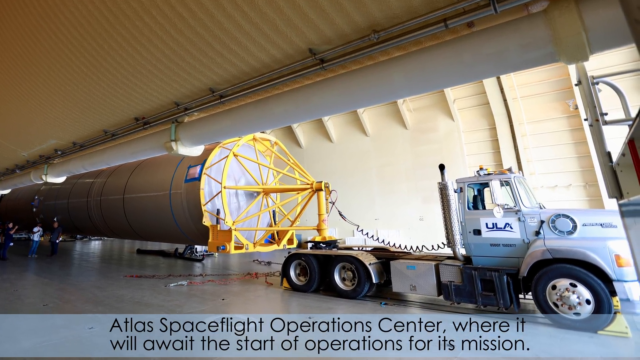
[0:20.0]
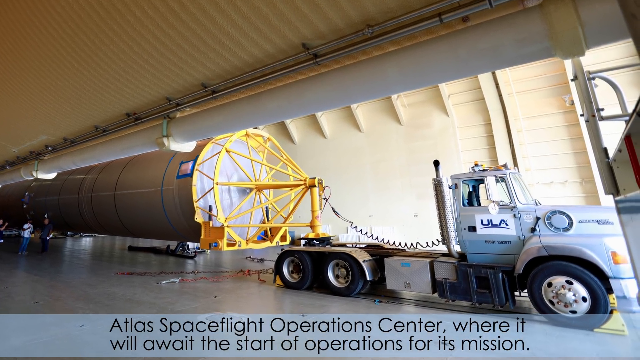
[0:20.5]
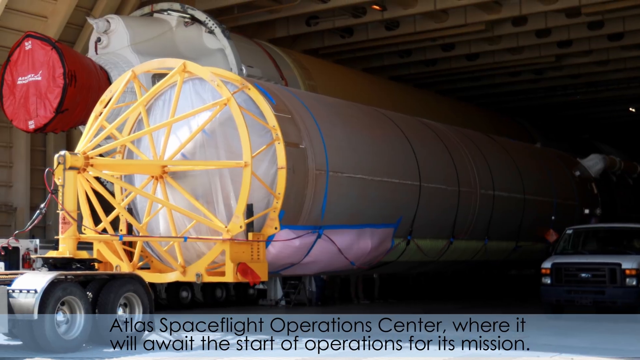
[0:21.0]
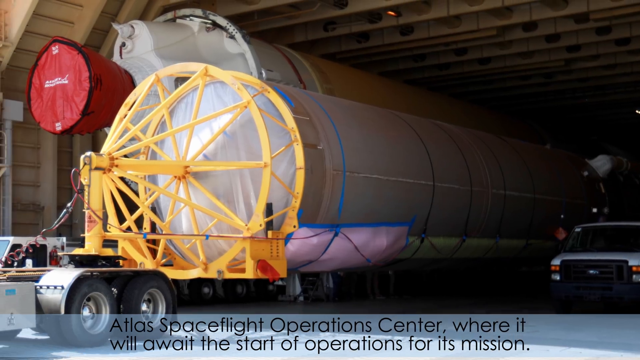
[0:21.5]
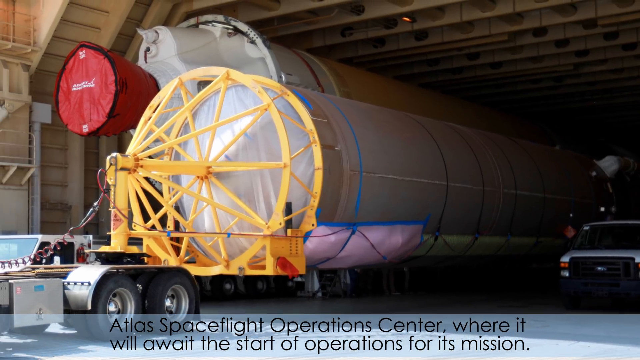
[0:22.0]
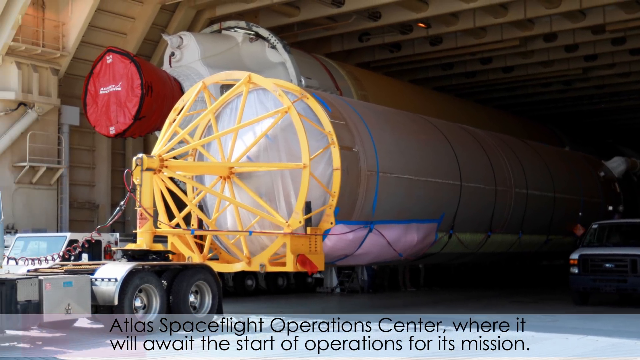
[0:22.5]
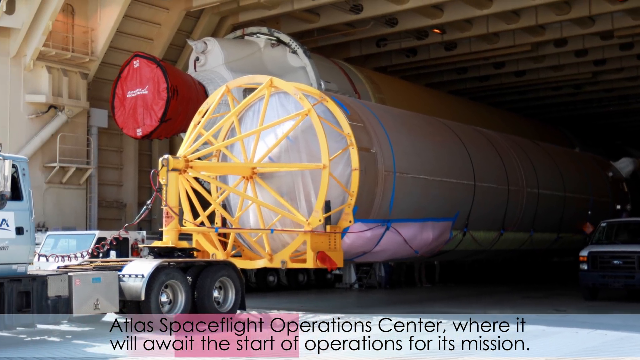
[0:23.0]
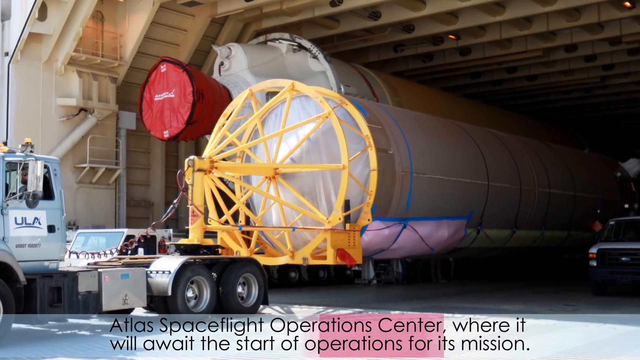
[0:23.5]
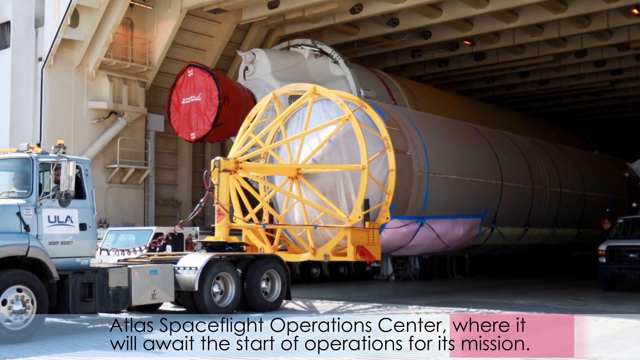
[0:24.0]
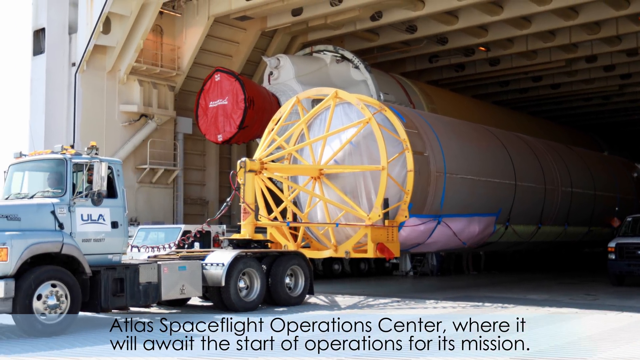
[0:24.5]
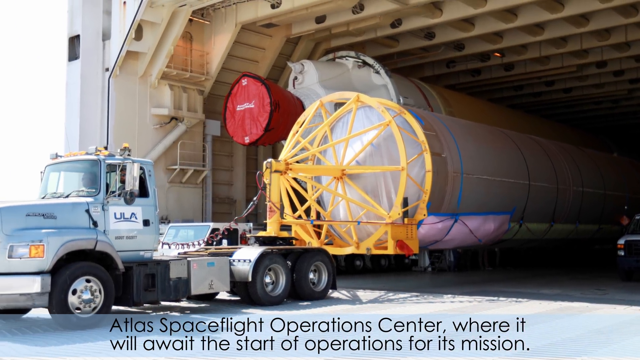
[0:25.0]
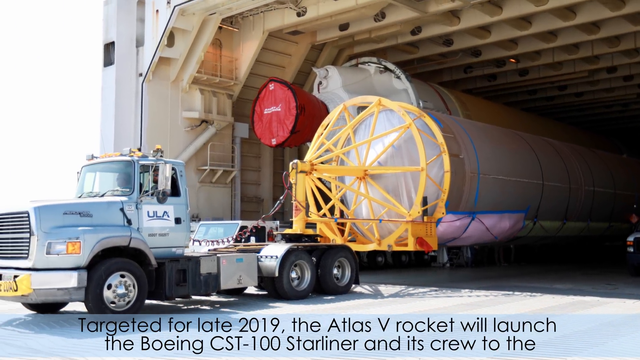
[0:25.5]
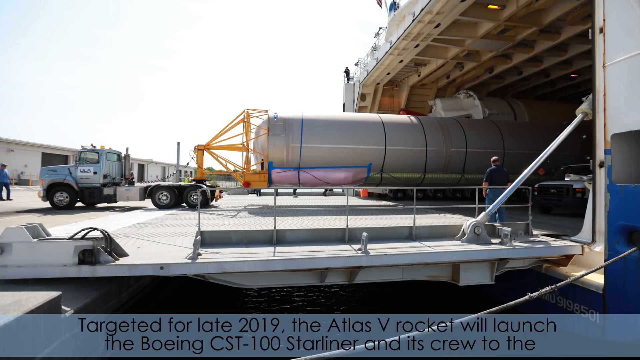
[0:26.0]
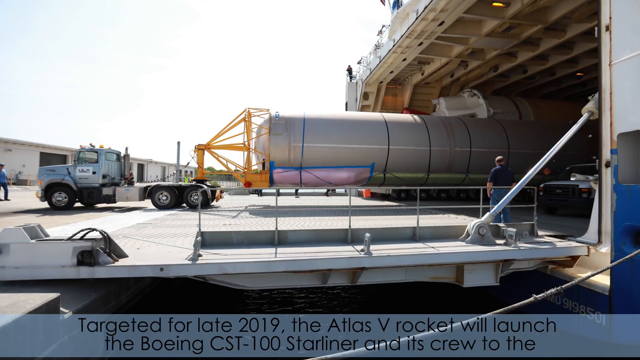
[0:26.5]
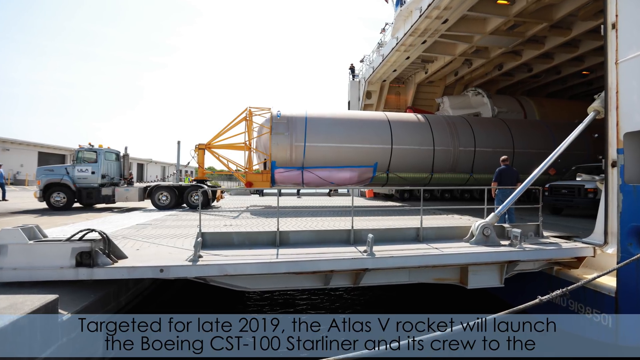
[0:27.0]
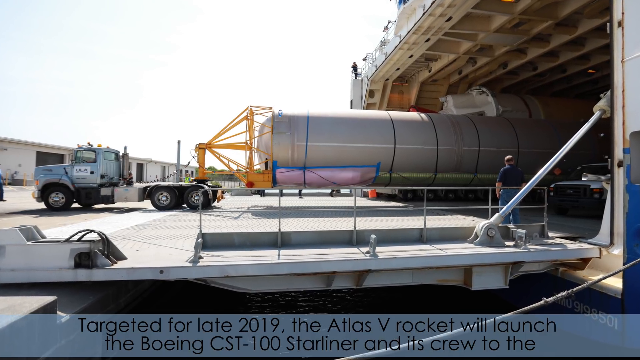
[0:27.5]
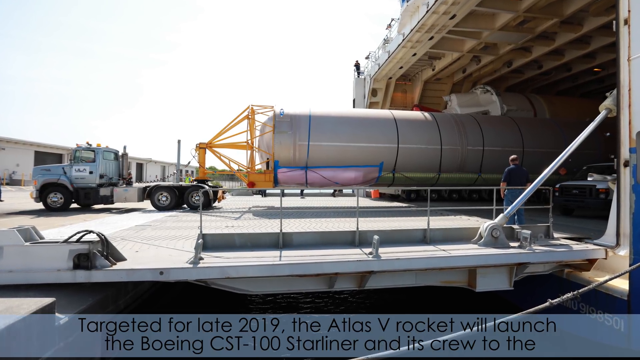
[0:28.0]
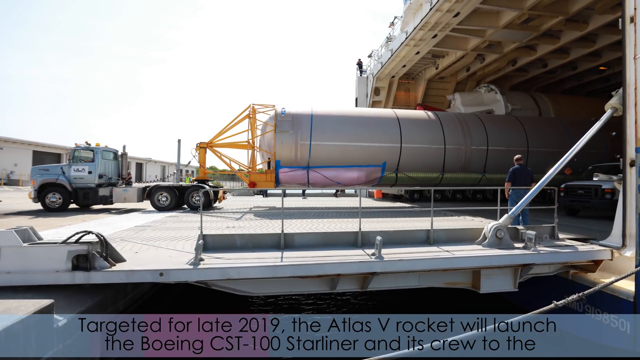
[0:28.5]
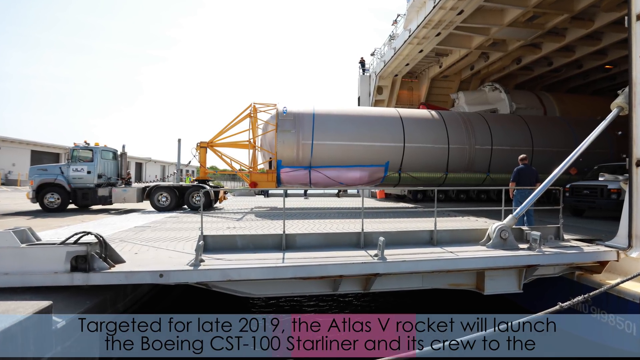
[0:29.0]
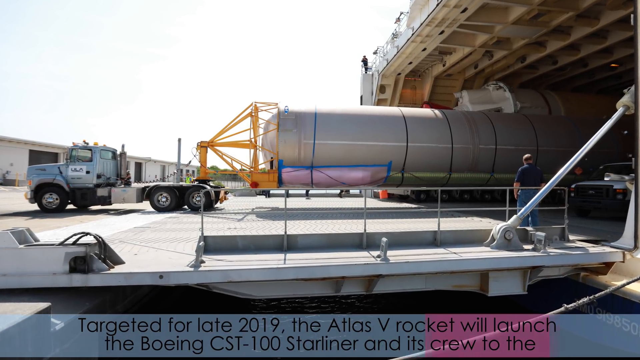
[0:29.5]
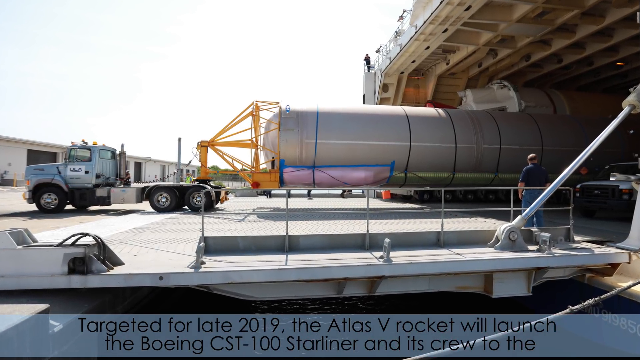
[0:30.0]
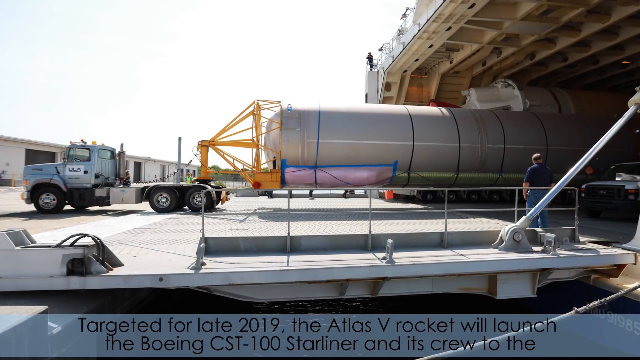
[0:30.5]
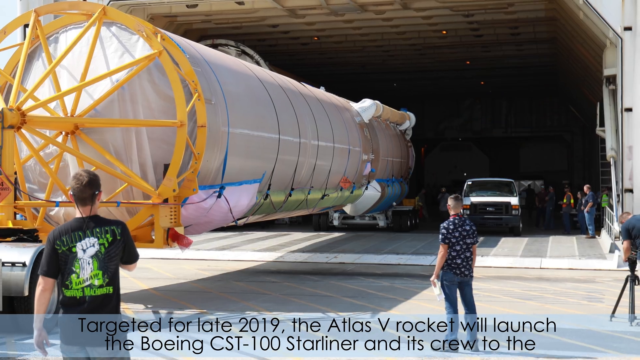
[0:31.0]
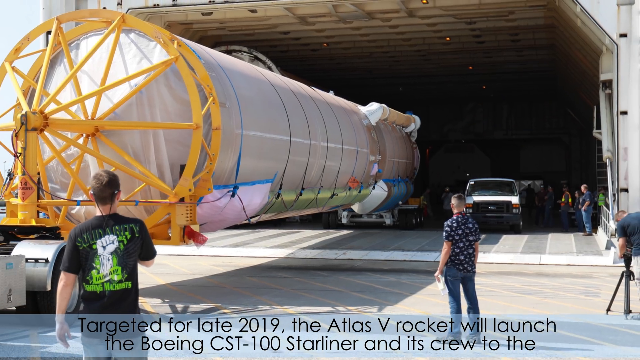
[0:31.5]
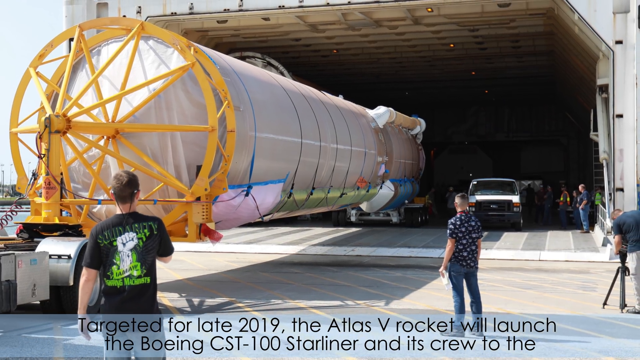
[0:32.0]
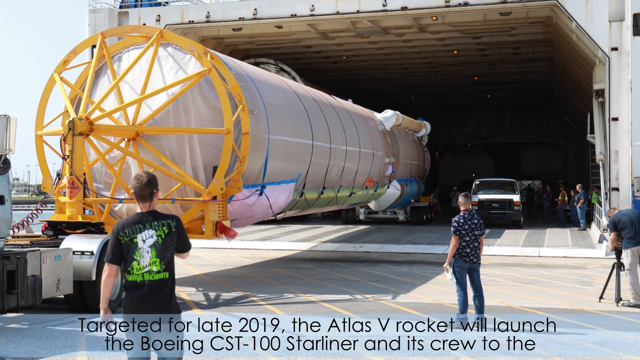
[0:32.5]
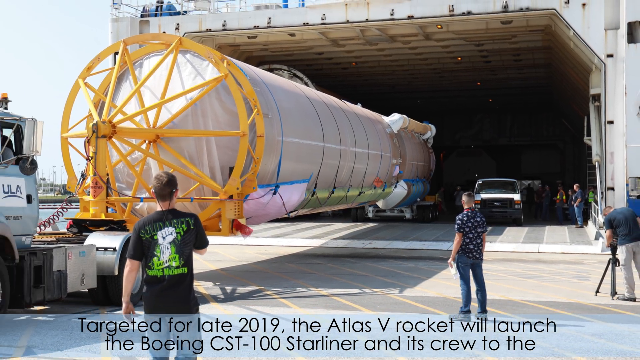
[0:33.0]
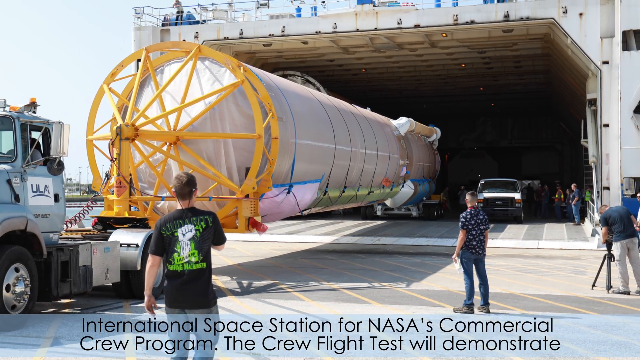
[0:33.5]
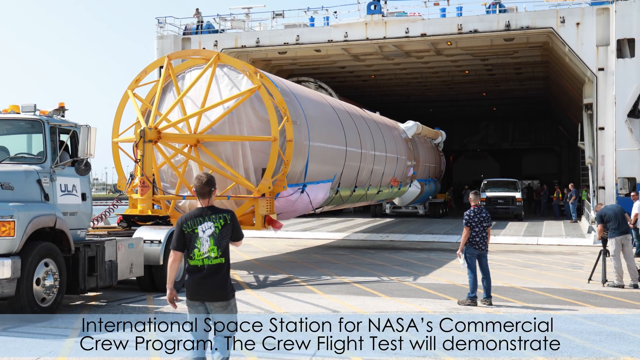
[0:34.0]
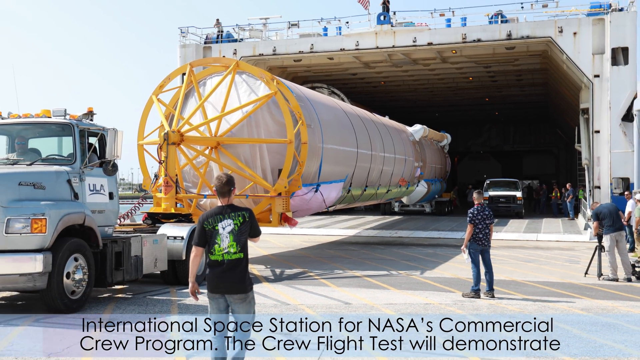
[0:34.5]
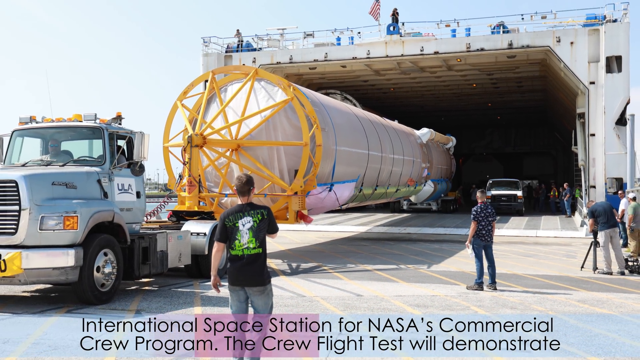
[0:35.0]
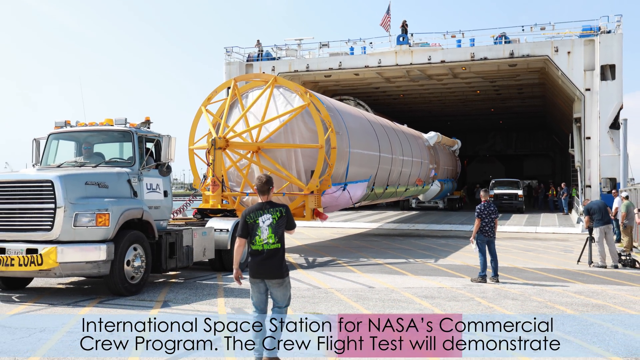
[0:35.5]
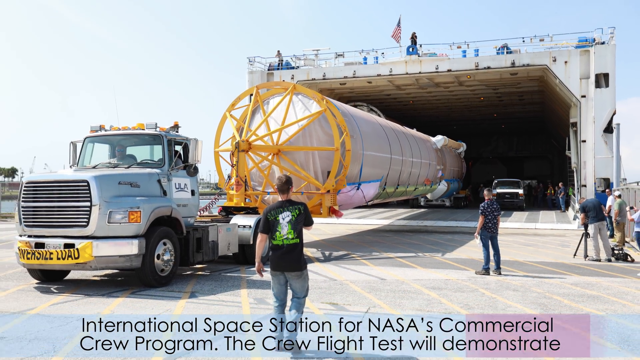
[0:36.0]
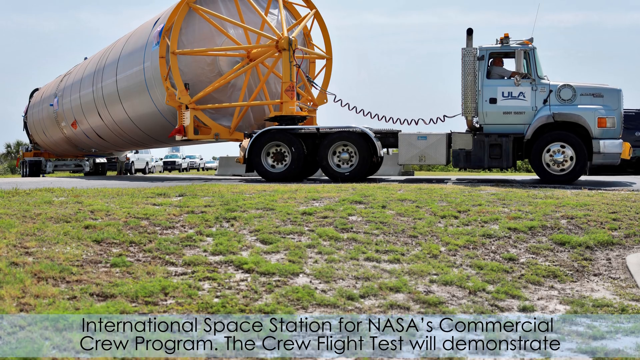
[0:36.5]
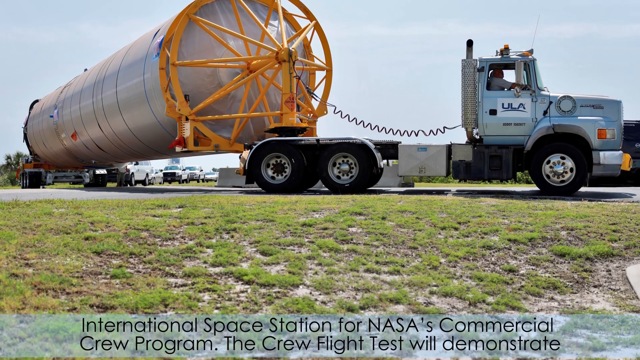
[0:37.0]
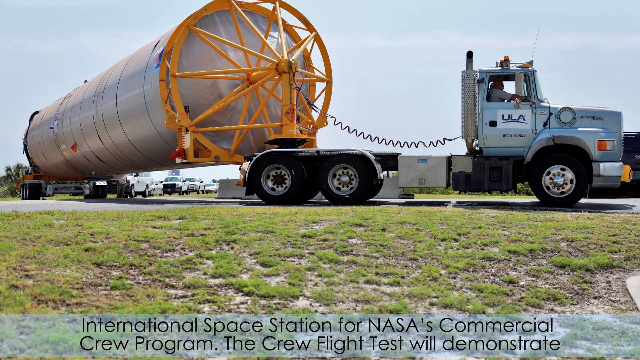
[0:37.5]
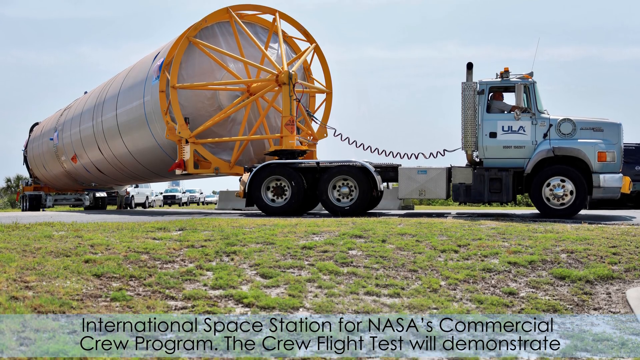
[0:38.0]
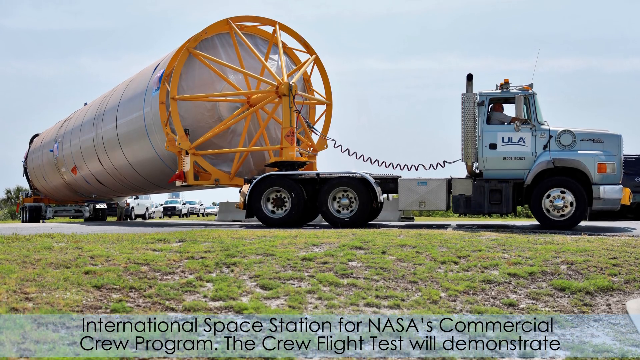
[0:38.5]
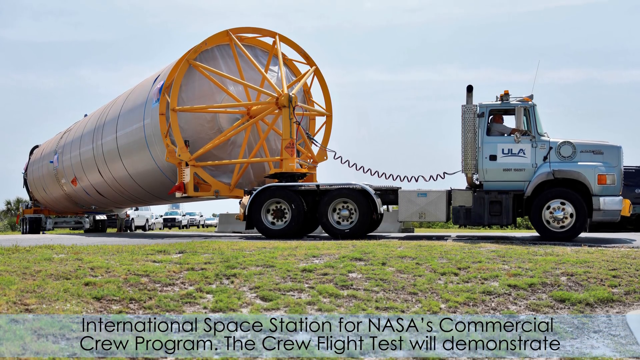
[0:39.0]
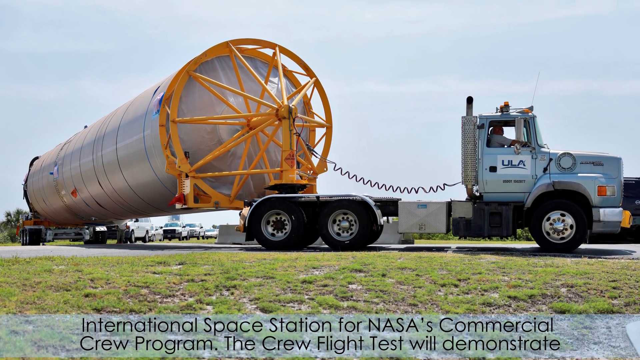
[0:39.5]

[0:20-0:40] A series of still photos shows the long tubular booster rockets. The full length of a booster is never visible because they are so long they run off the screen; they are perhaps 12 feet in diameter, maybe more, 15 feet, and very long. There are always two of them, pulled behind a truck cab, under a low ceiling that is barely taller than the boosters themselves. The camera is always moving, pulling away from them. The driver's side door on the left of the truck says "ULA" in all caps, with some text below. A caption at the bottom at one point reads "Targeted for late 2019, the Atlas V rocket will launch for Boeing..." and continues. Several other images are outdoors, showing the same ULA truck driving with the long booster rocket in tow. The booster is definitely longer than a large 18-wheeler truck, very long and big. The camera is never really still; every photograph pans in one direction or the other.